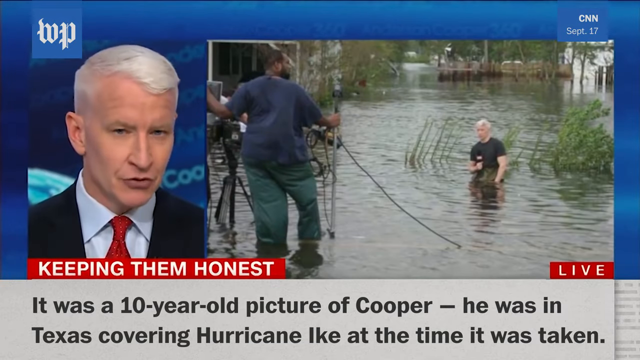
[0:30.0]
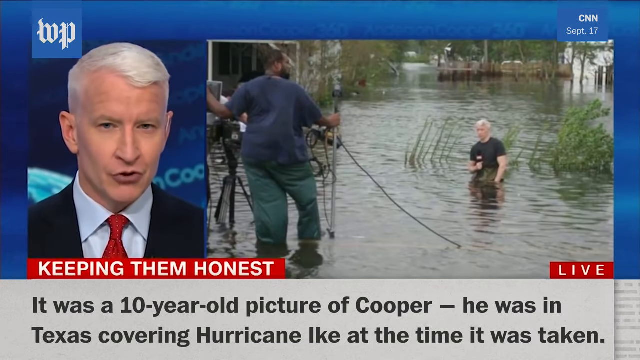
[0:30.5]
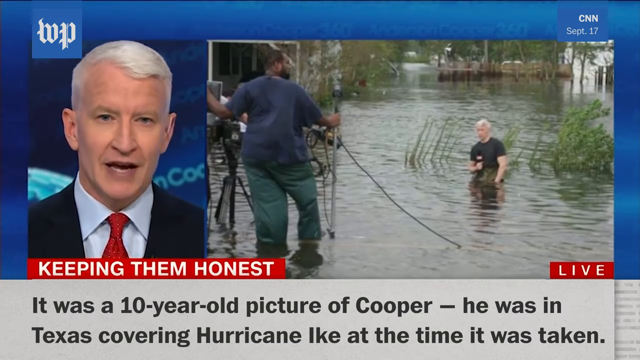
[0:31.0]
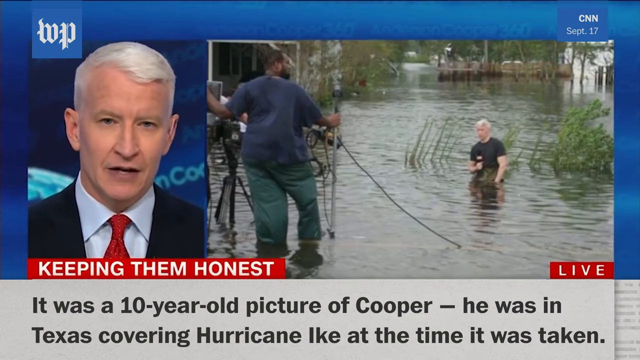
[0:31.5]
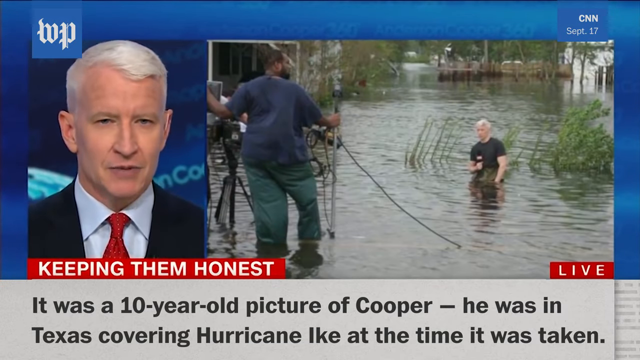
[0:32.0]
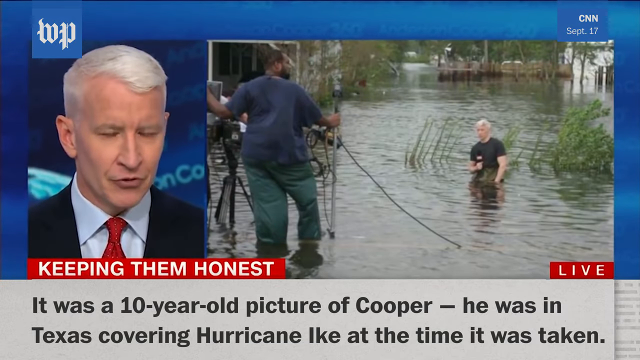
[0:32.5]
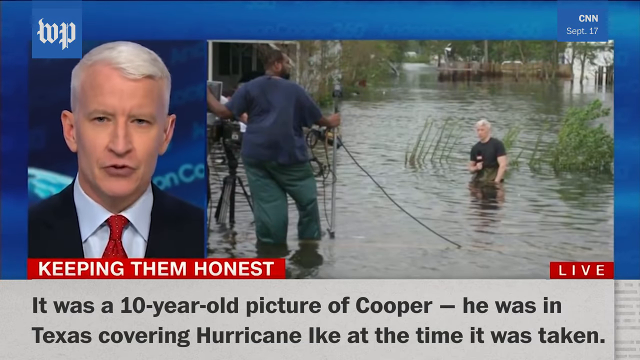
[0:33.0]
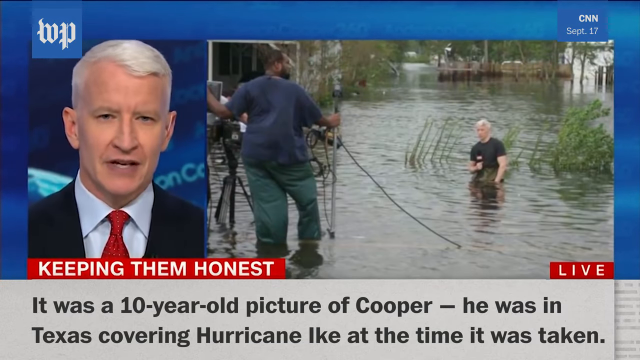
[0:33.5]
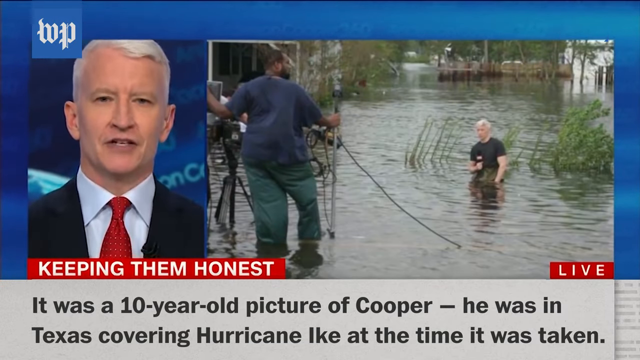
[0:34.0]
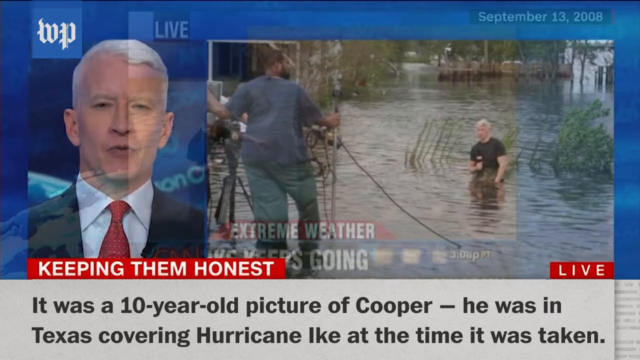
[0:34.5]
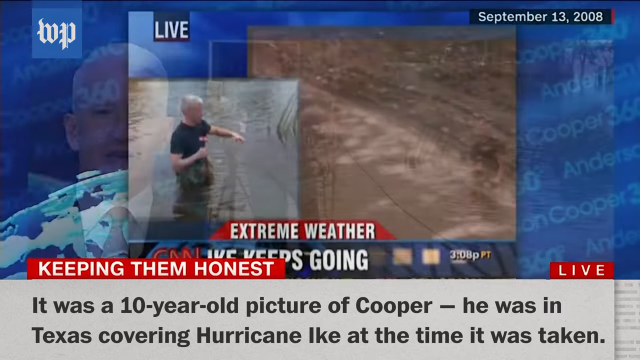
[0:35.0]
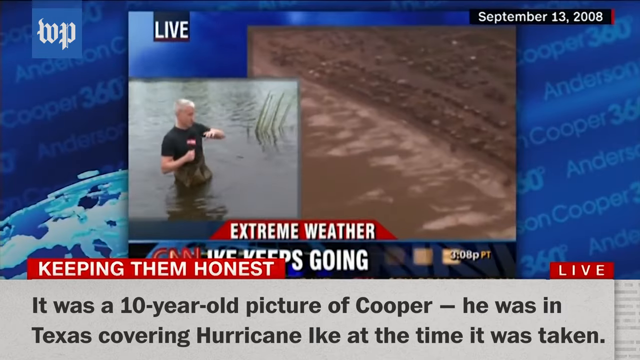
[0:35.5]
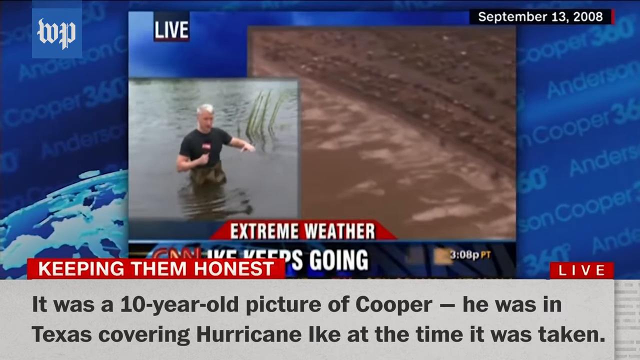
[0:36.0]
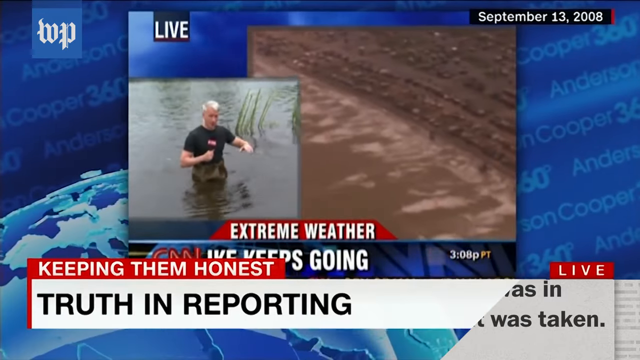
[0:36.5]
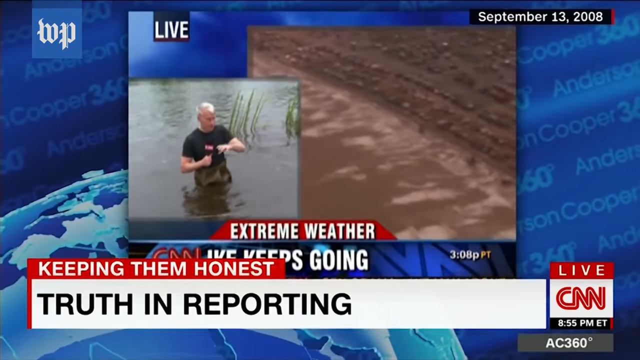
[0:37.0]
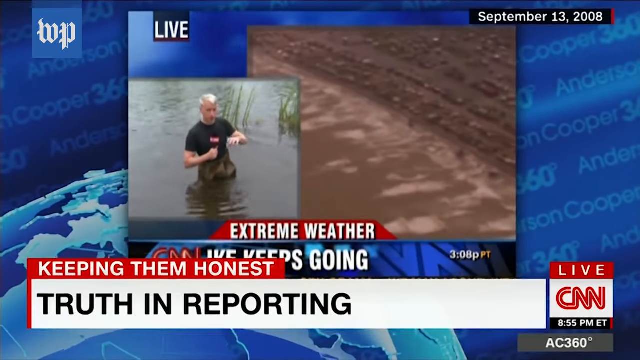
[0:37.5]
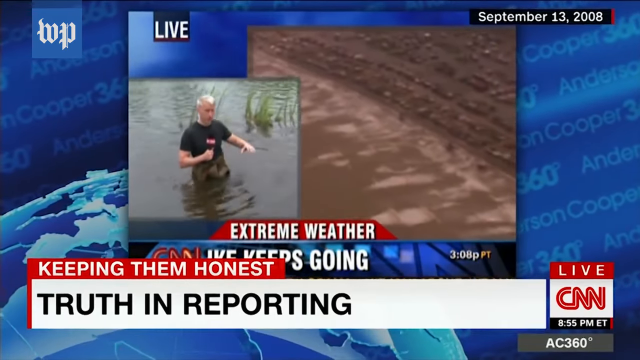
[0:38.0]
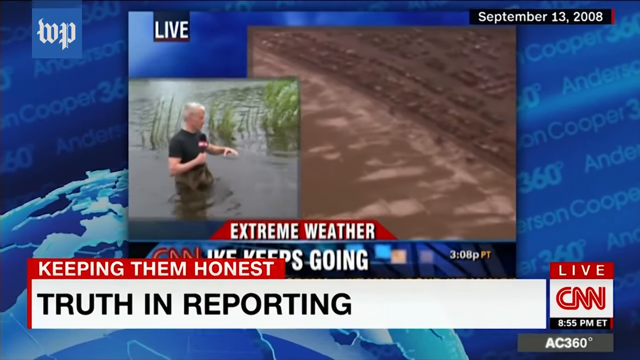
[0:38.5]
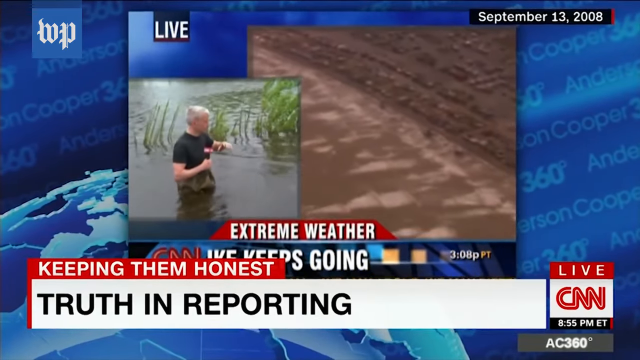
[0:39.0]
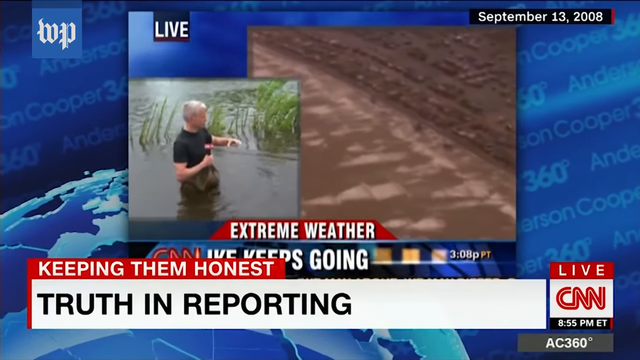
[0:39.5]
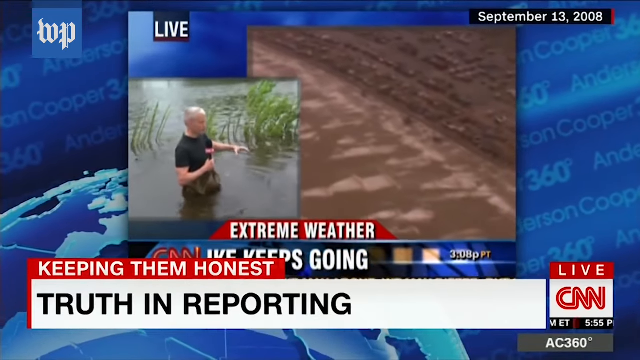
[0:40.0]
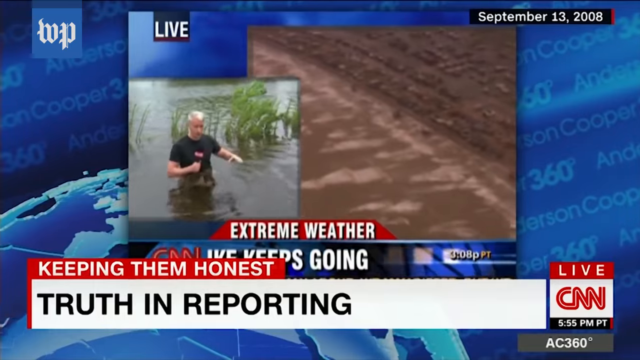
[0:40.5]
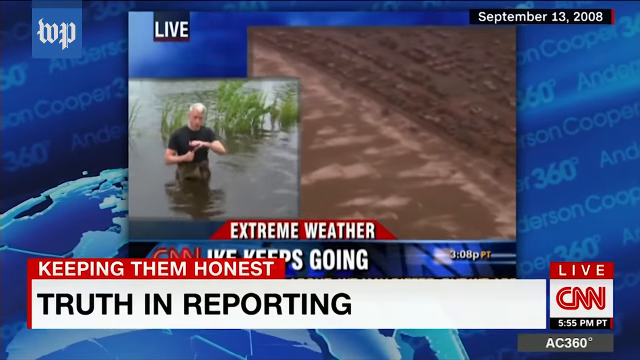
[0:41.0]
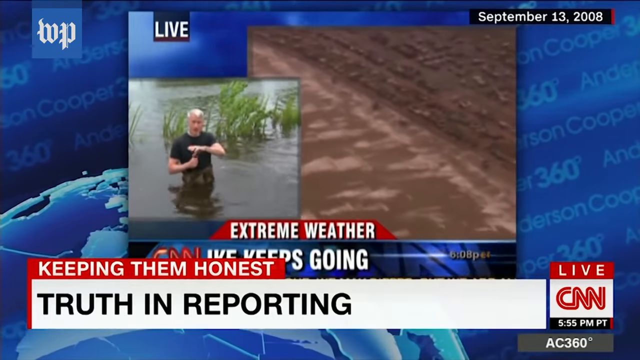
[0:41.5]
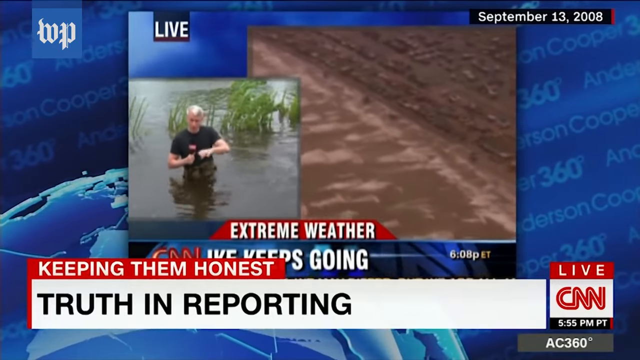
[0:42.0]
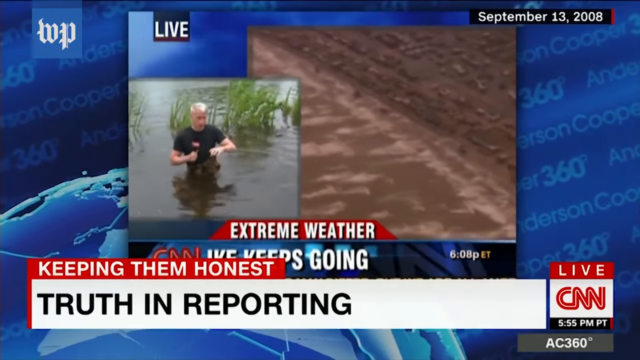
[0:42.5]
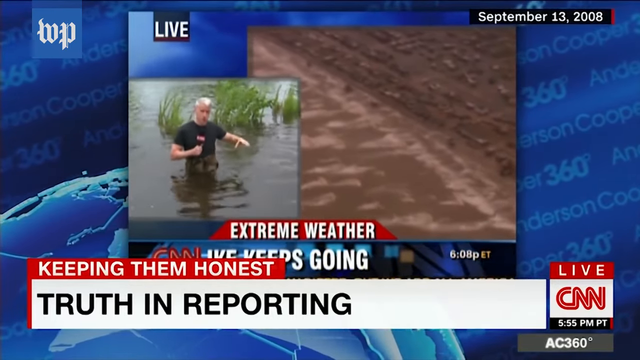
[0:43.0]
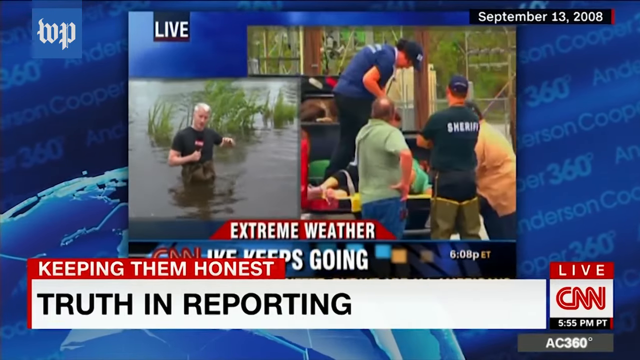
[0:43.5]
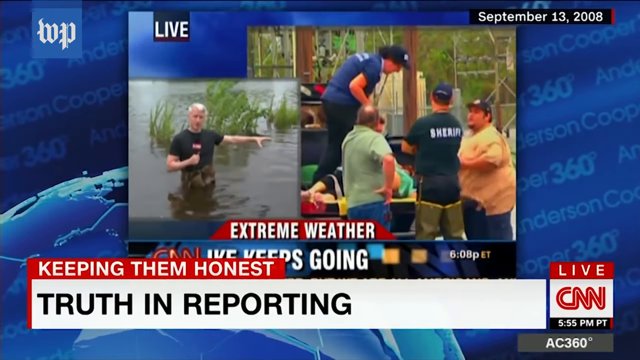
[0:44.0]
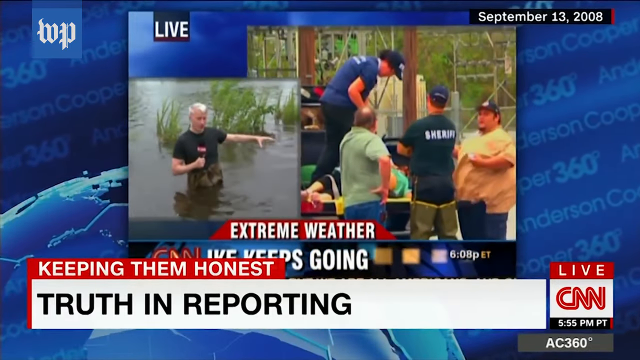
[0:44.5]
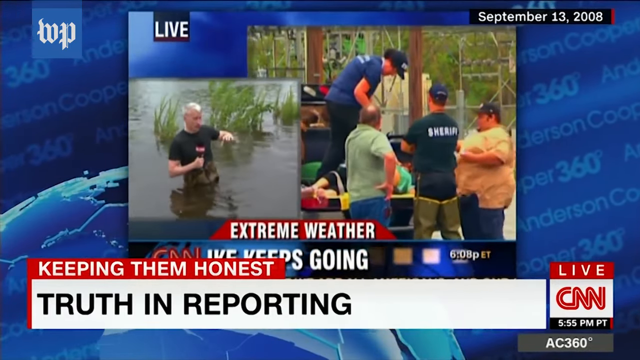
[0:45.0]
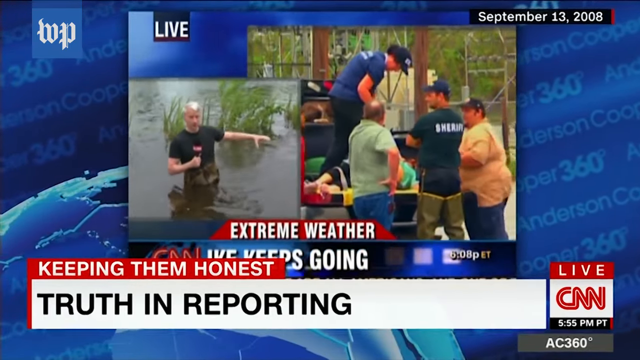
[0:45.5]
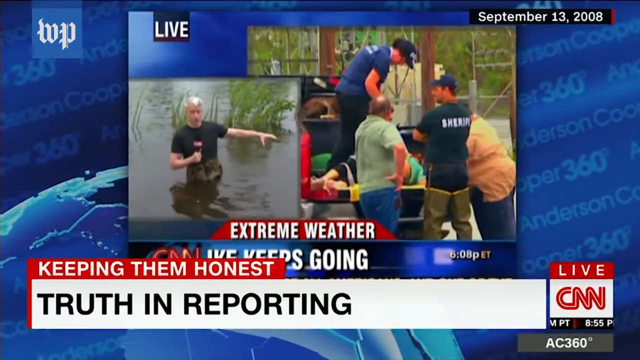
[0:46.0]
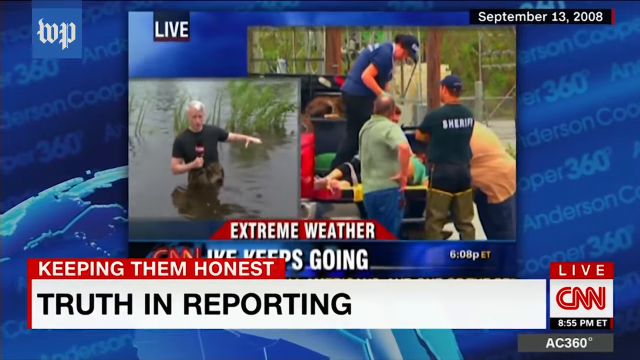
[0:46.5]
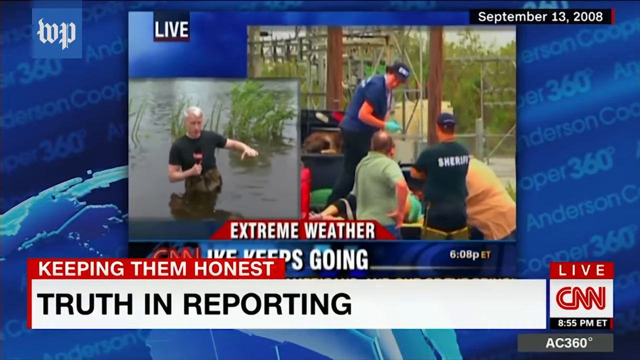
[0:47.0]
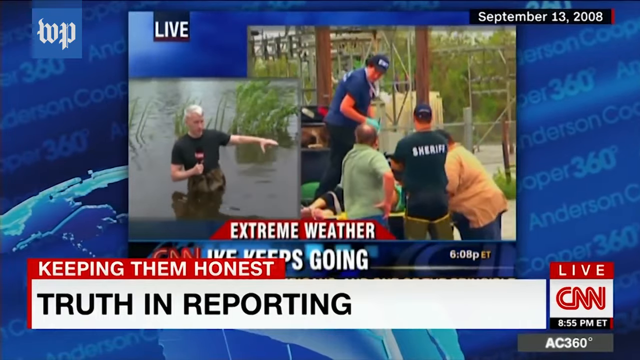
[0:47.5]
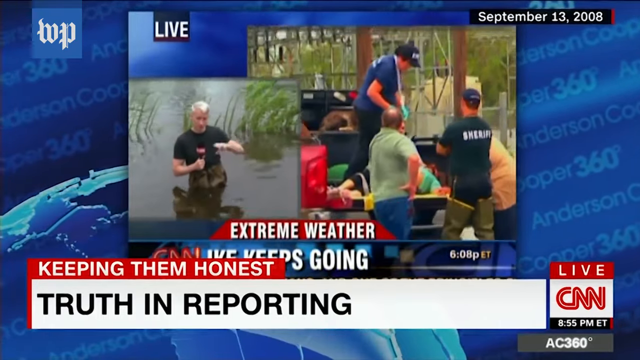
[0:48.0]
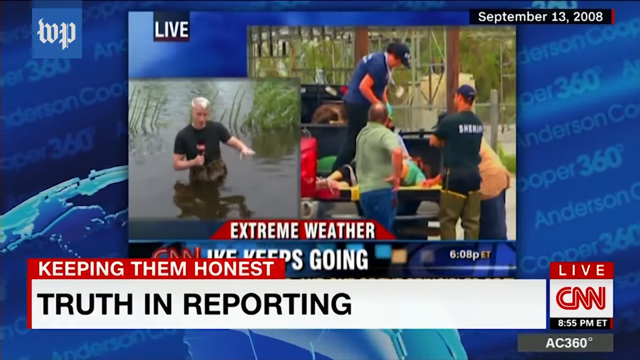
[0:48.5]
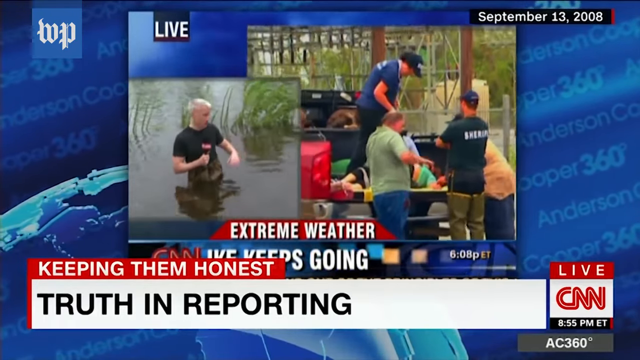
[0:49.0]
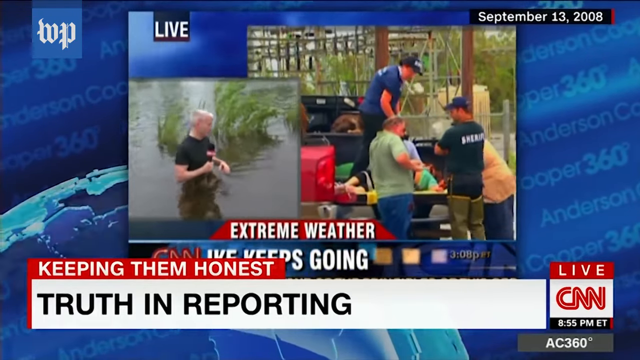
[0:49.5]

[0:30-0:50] In CNN live news-style coverage, Anderson Cooper is in a sort of flood-like environment with a cameraman beside him. Cooper is kind of walking around in deep, flooded water.